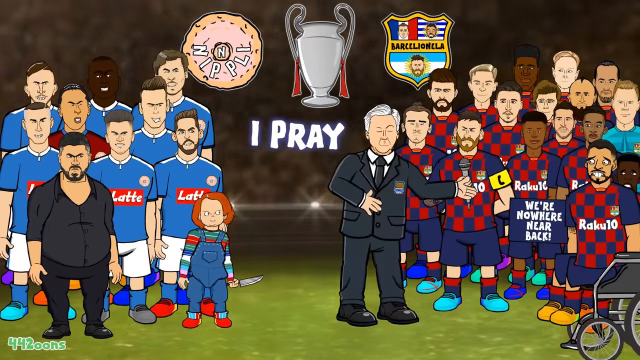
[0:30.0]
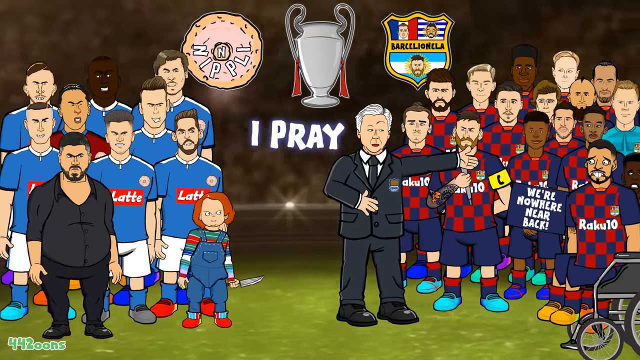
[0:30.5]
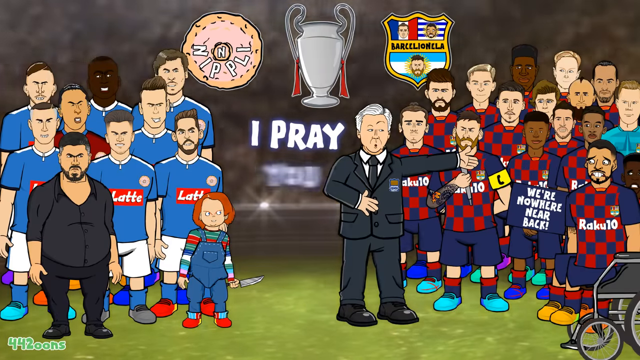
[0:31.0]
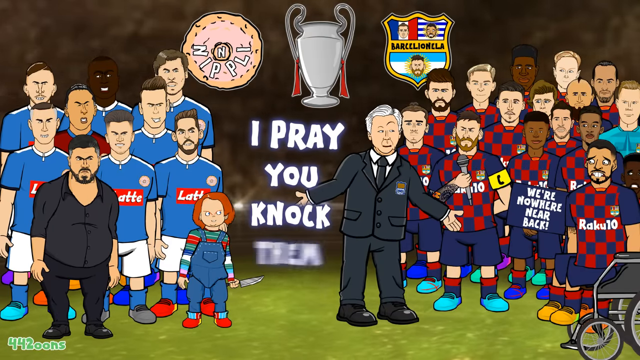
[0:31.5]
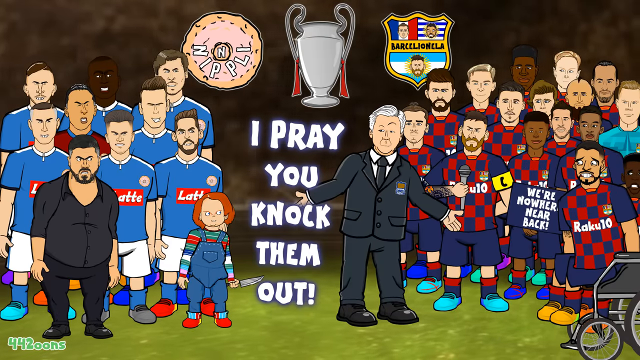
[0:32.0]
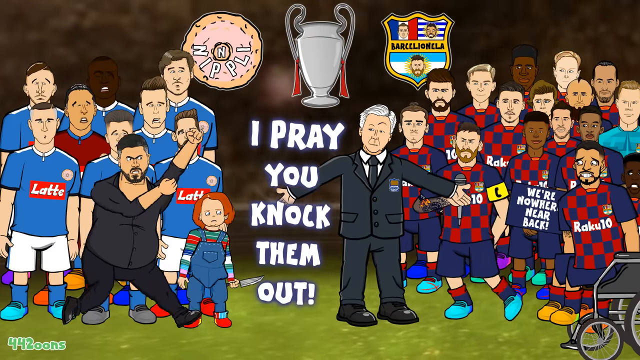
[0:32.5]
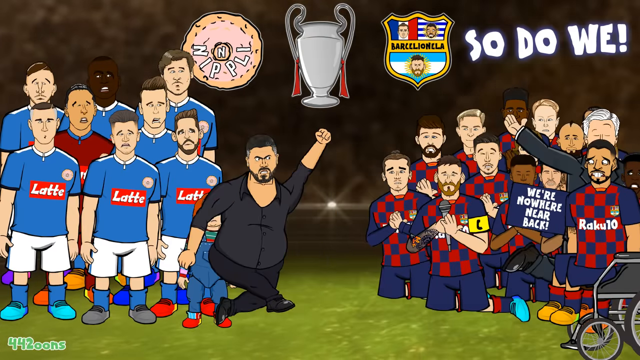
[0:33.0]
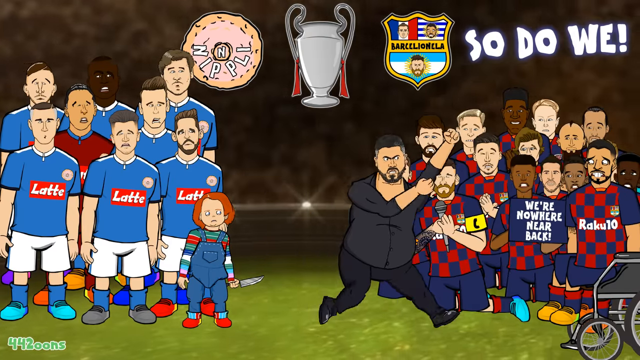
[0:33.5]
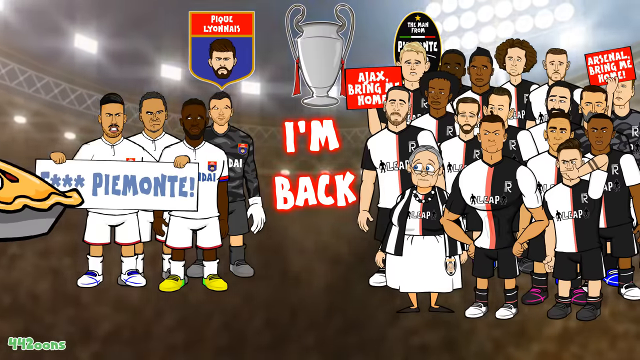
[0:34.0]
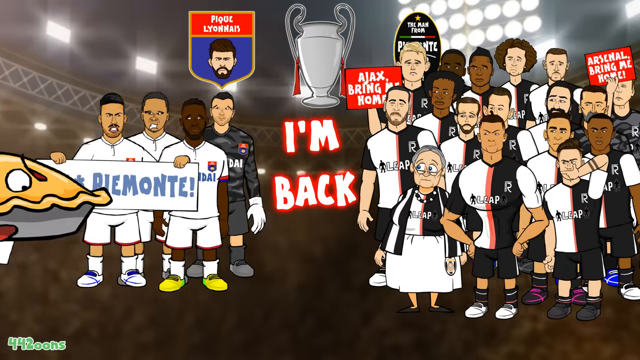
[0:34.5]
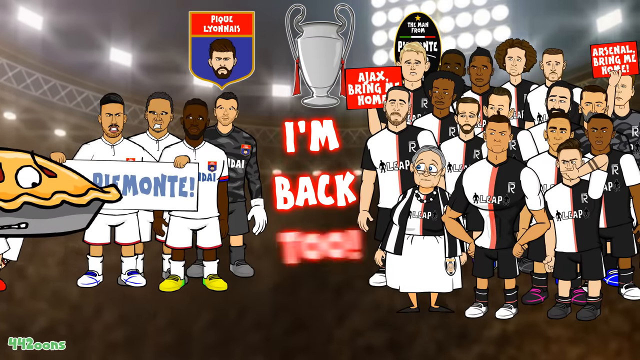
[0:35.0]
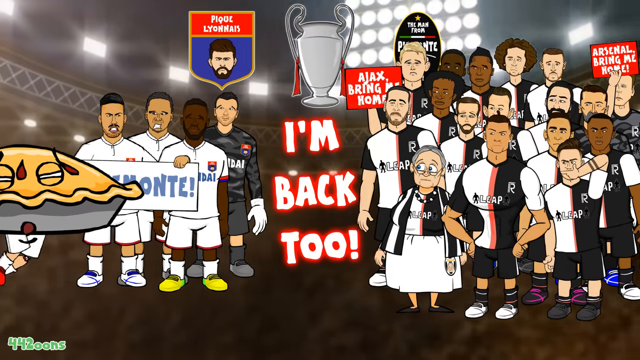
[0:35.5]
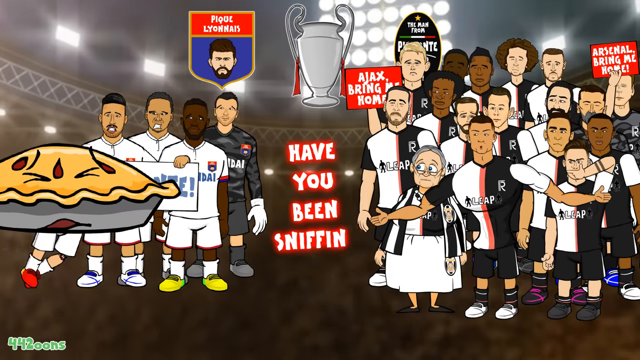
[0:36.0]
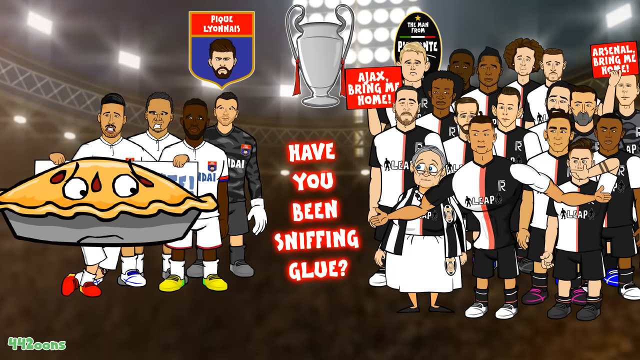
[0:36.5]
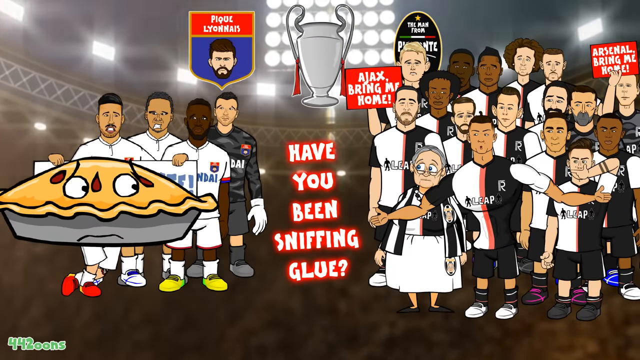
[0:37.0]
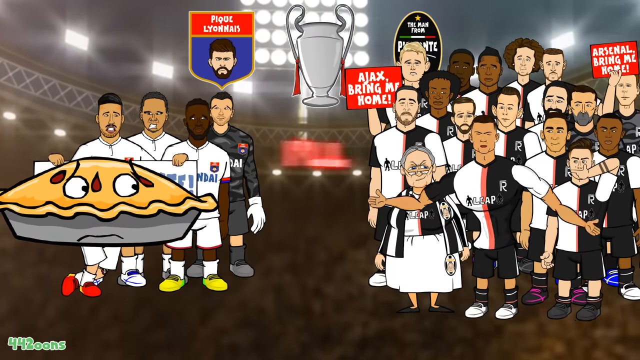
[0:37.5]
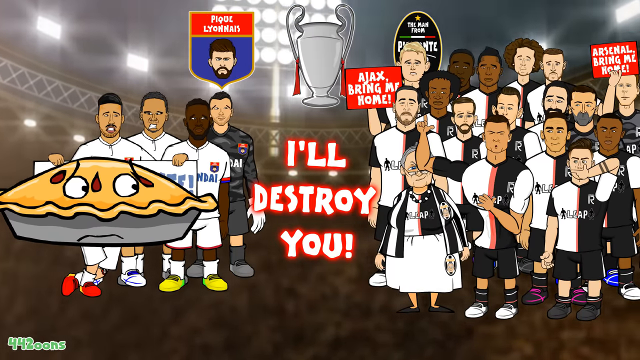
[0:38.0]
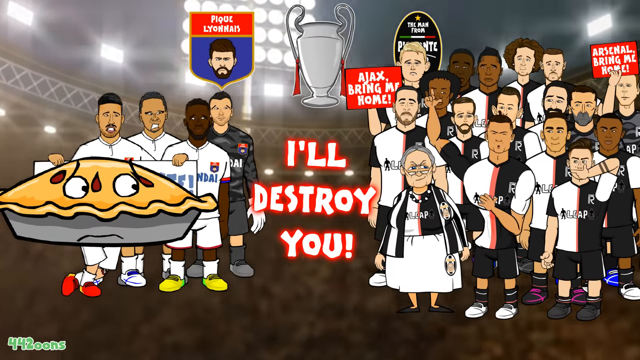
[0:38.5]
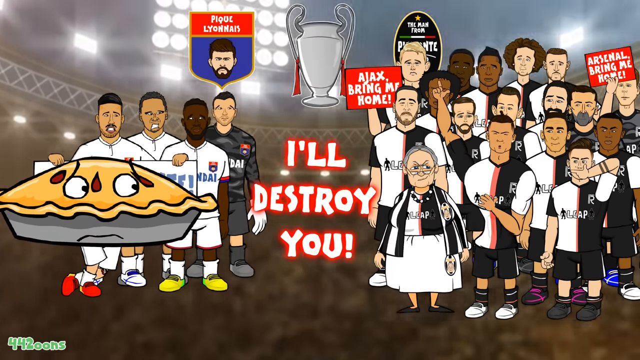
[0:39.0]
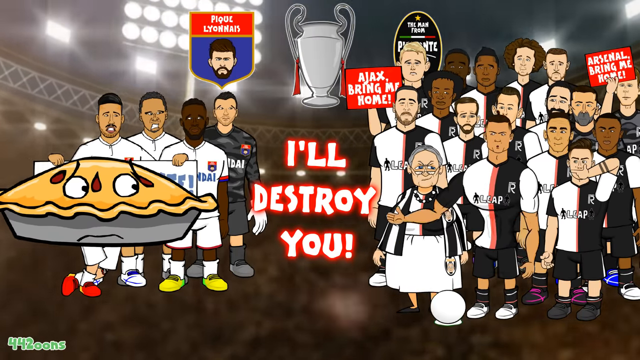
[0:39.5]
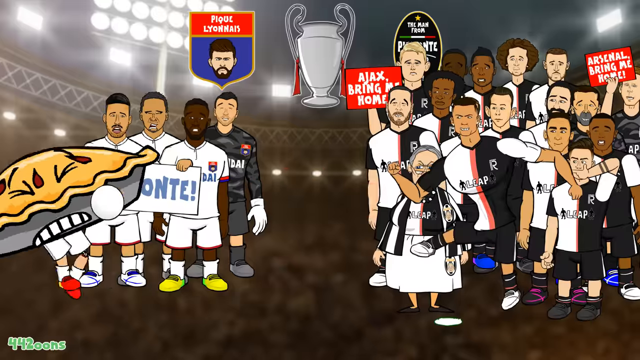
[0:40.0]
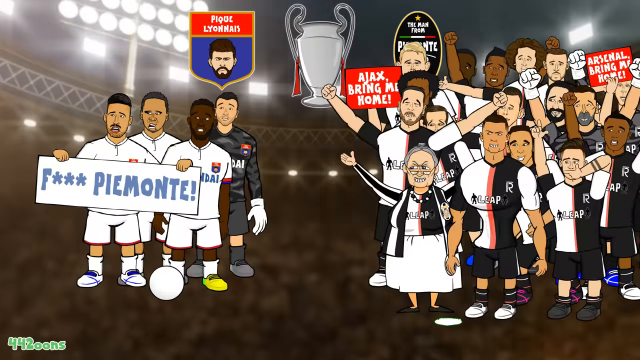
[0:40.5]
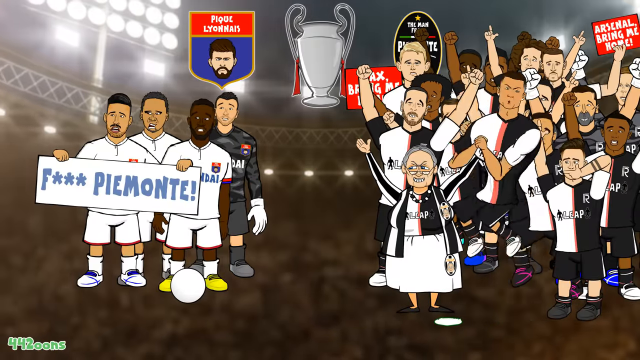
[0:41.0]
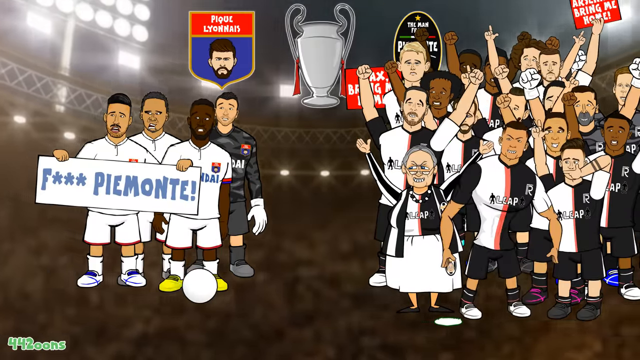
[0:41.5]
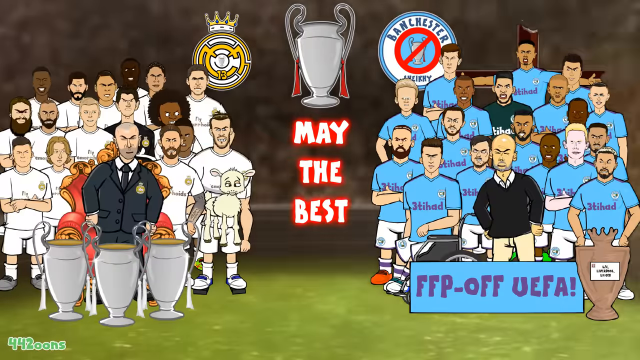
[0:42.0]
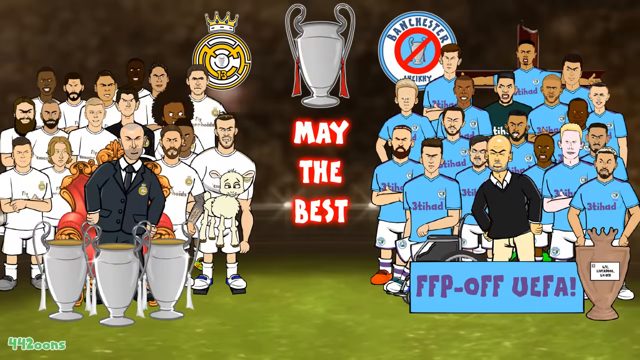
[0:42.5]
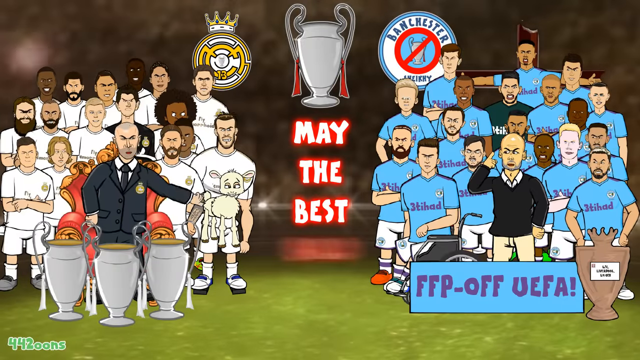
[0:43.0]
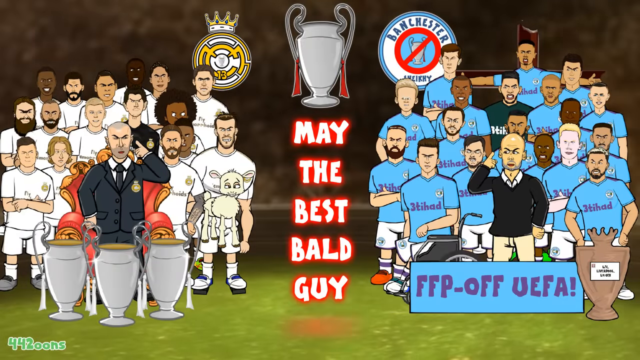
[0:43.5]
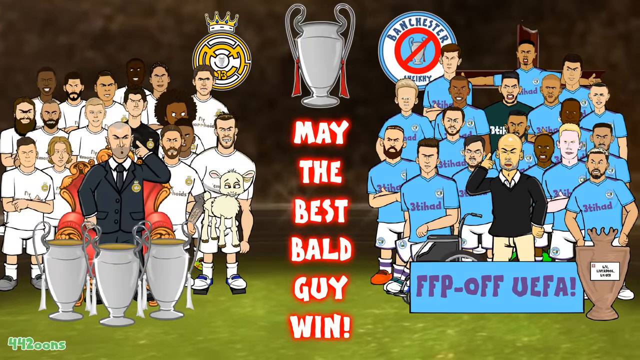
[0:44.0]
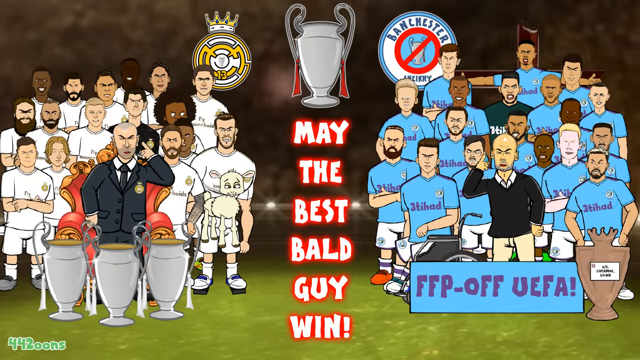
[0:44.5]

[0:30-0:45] The animation shows a team in blue jerseys on the left and a team in blue and red checkered jerseys on the right. On the left, a Chucky doll holds a knife pointed at the checkered team. One of the players in checkered looks like Messi. In front of the blue team is a portly man with "latte" on his jersey; he wears black pants and a black shirt and has a big potbelly. Among the checkered players, one guy is in a wheelchair, with "Raku 10" on his jersey. Someone holds a sign that says "we're nowhere near back", and their team badge says "Barcelona". The words "I pray you knock them out" appear on the screen, and the portly man runs over to them. It then cuts to another pair of teams. On the left there are only three guys in white jerseys and a goalkeeper; on the right there appear to be Cristiano Ronaldo, a grandmother and a bunch of people, in jerseys that are half white, half black with a red stripe down the middle. The players on the left have a sign that says "F Piemonte", while those on the right hold a sign that says "Arsenal bring me home Ajax bring me home". The words "I'm back" appear, a pie with legs walks onto the screen, and Ronaldo kicks the ball at the pie, hitting it.